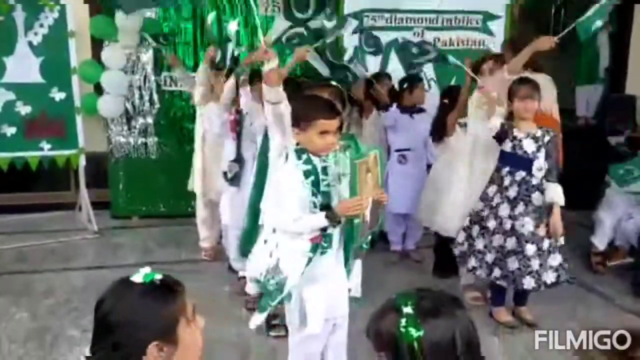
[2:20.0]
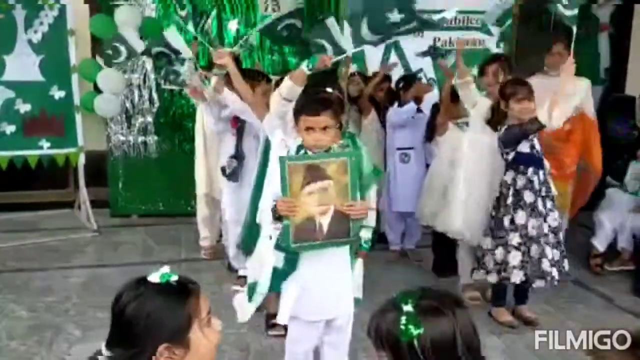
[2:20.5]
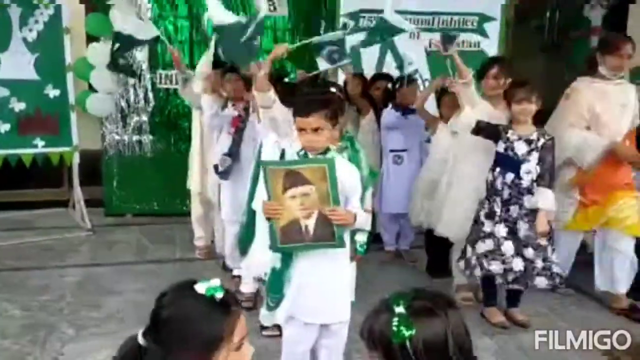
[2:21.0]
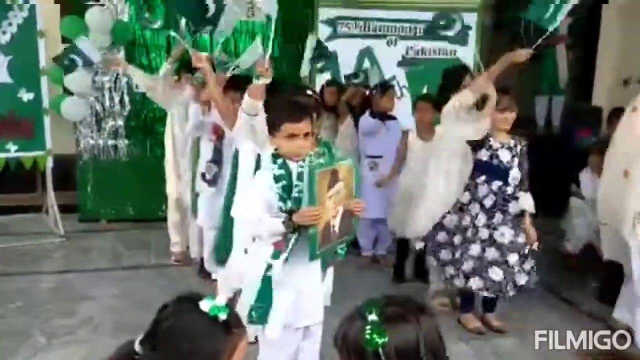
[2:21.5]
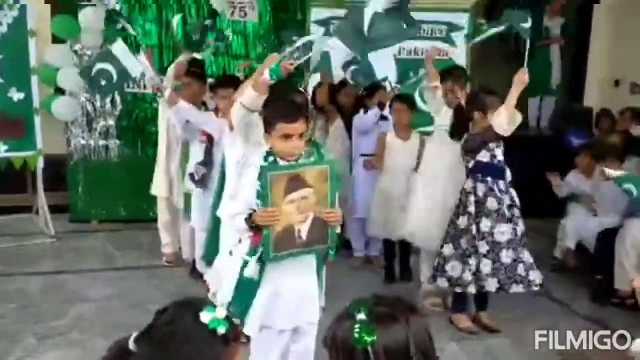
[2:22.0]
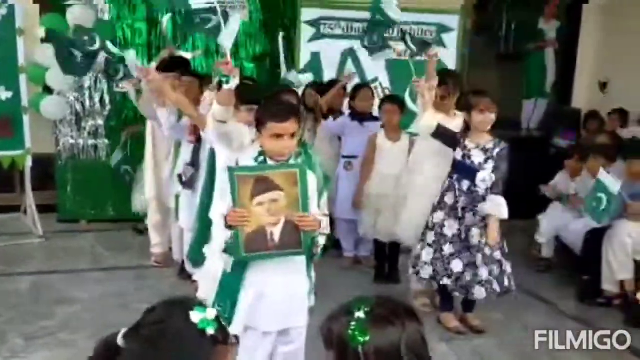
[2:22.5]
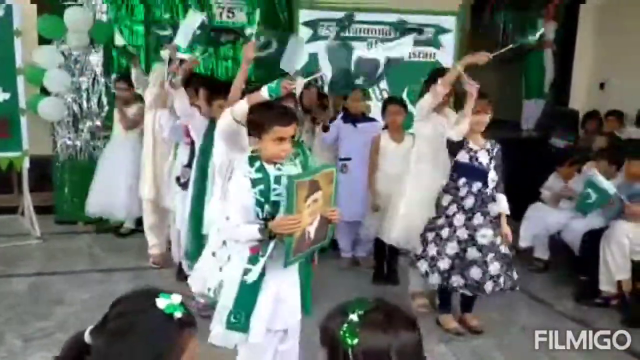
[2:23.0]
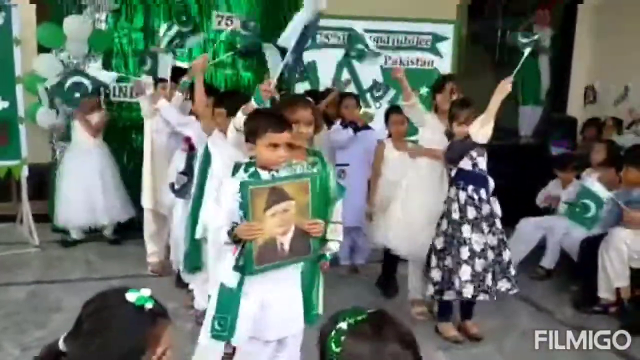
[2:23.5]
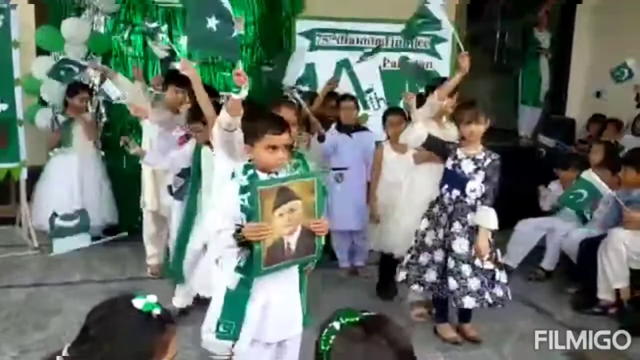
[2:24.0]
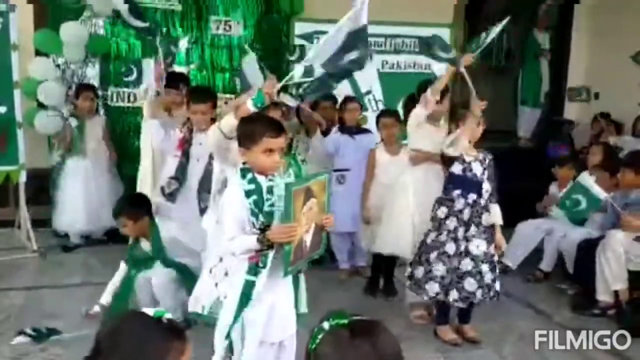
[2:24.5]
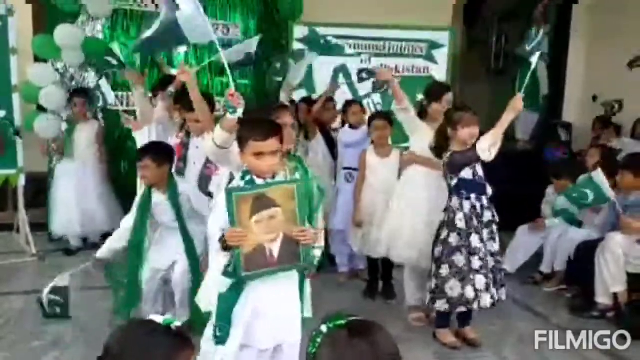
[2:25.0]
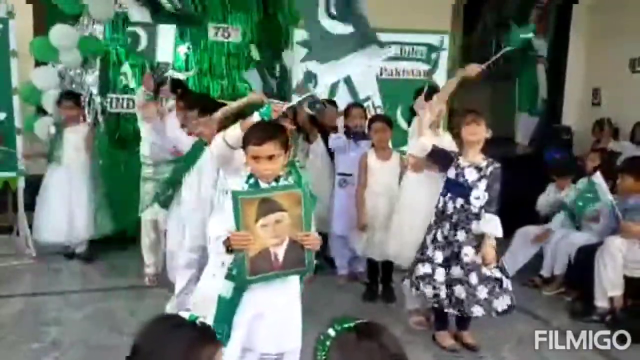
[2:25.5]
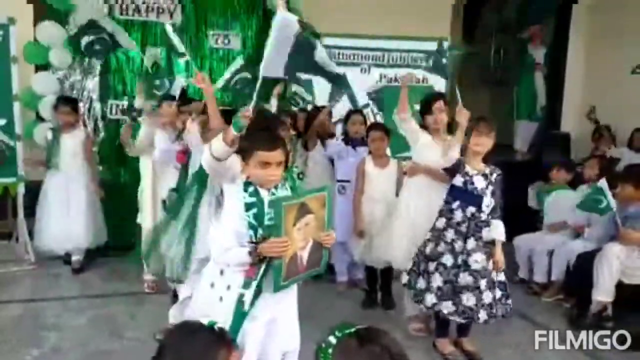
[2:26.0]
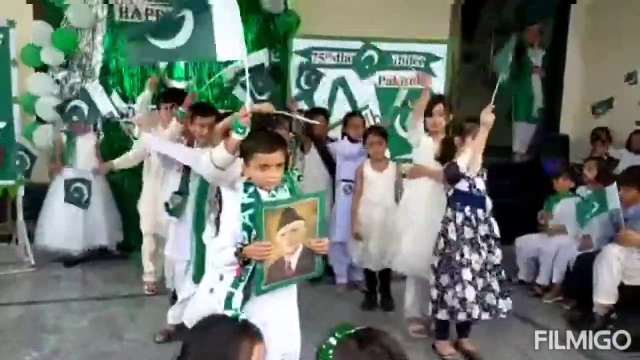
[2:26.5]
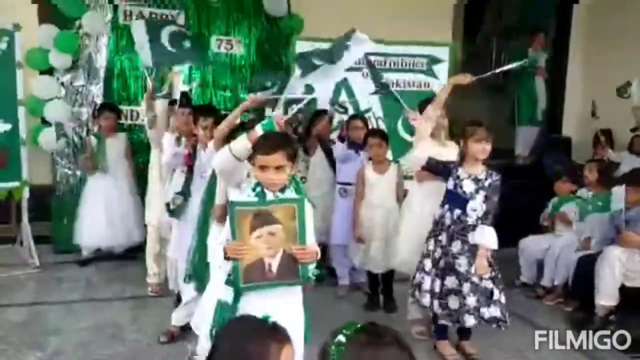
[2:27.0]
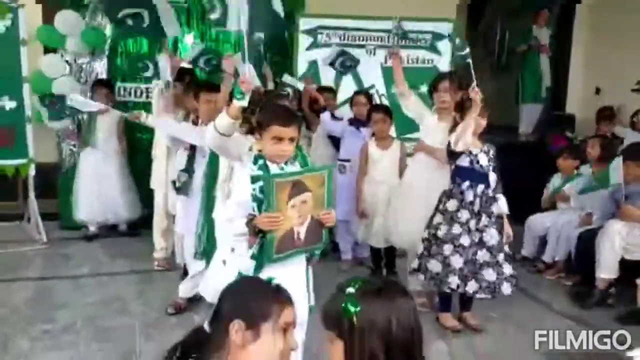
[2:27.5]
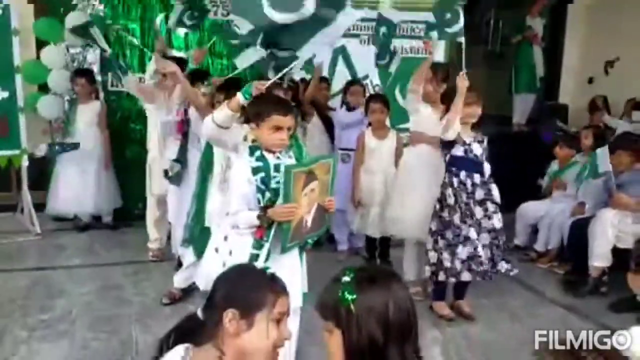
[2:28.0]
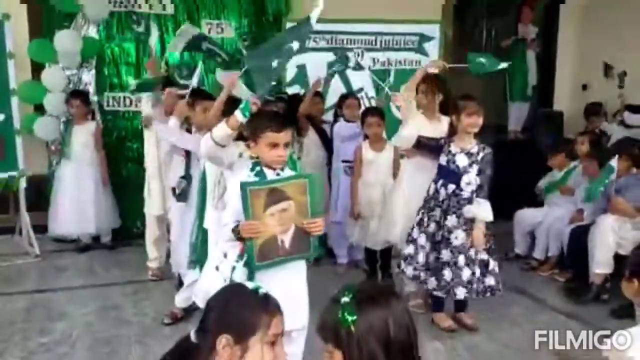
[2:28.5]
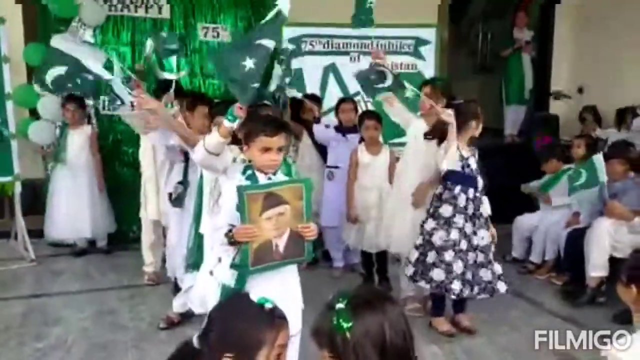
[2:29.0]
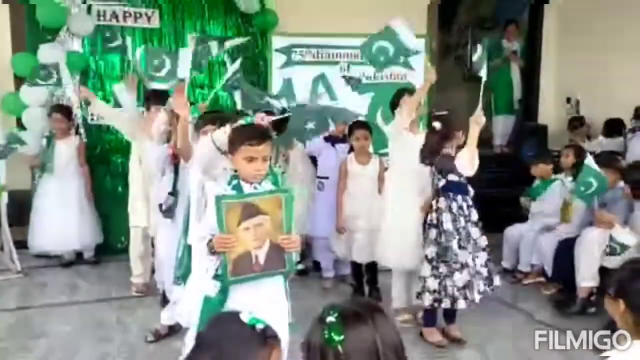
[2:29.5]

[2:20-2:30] The two rows of children keep waving the picture of the person or the Pakistani flags. One of the boys from the left row drops his flag and reaches out to grab it quickly. The teacher in the orange and cream dress walks out of frame on the right-hand side. One of the girls in a white dress holds a flag but hangs out on the left side, not really part of either row, waving her flag low and lazily at around waist level. One boy in the right-hand crowd claps, and the right-hand crowd is still kind of waving some of their flags. The woman in the doorway just kind of watches, not moving much. Two girls in the frontmost crowd are not moving much either and look like they are talking to each other.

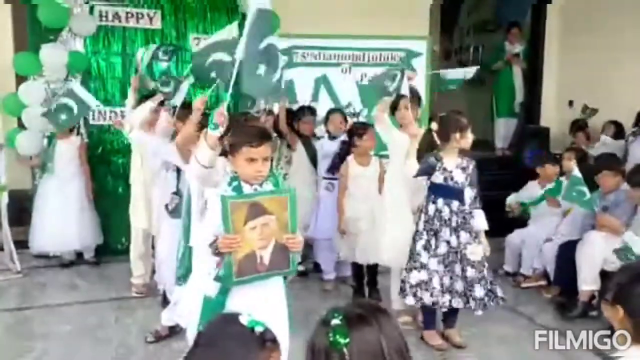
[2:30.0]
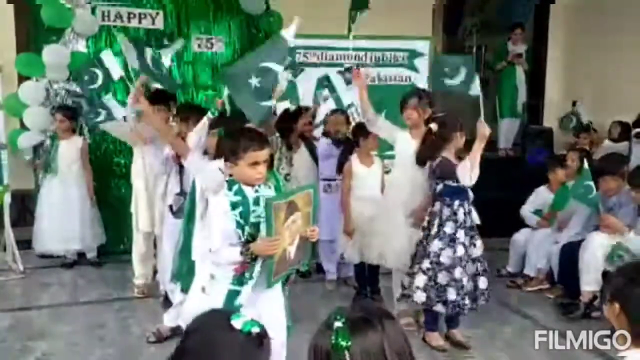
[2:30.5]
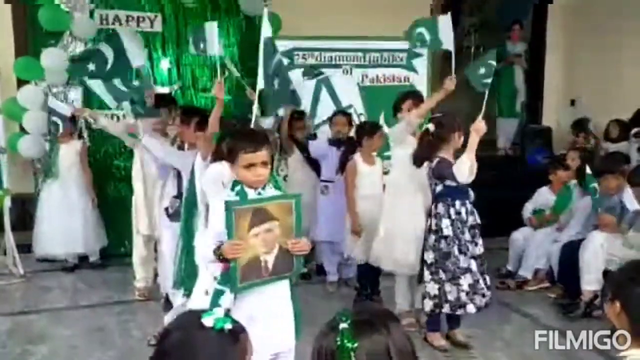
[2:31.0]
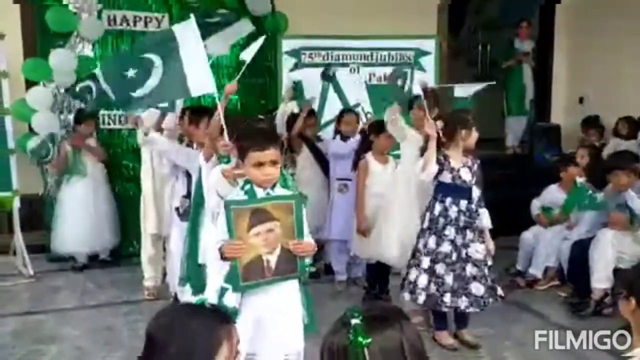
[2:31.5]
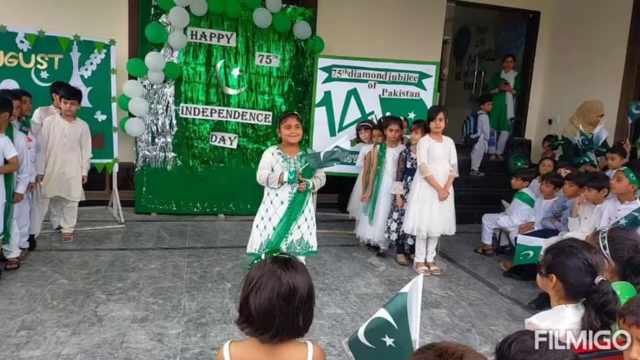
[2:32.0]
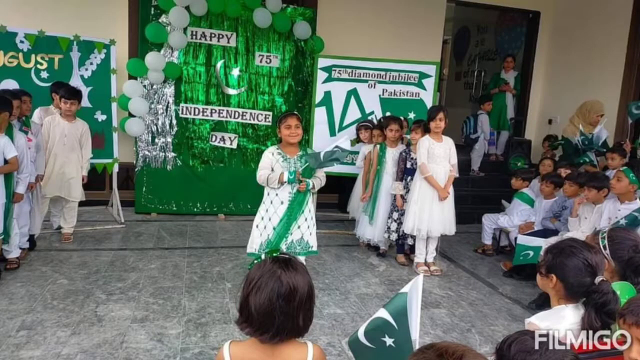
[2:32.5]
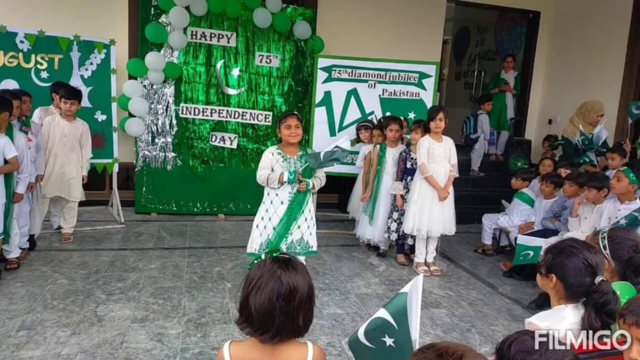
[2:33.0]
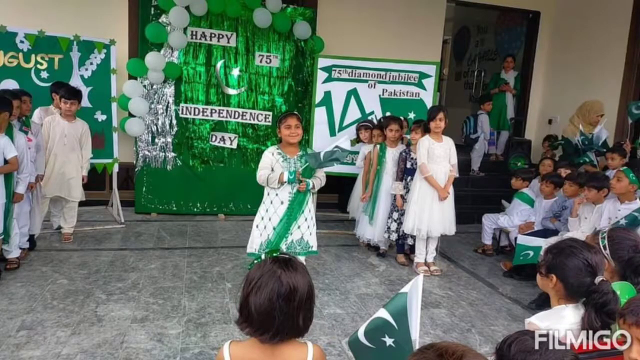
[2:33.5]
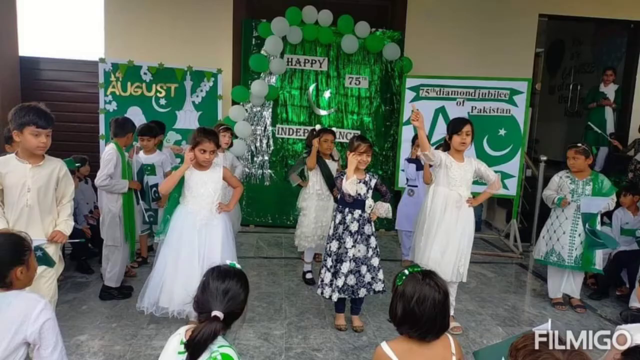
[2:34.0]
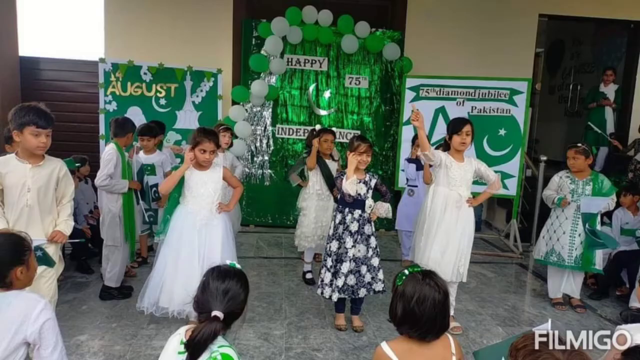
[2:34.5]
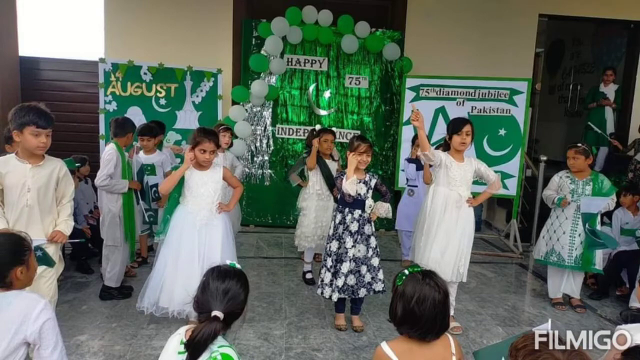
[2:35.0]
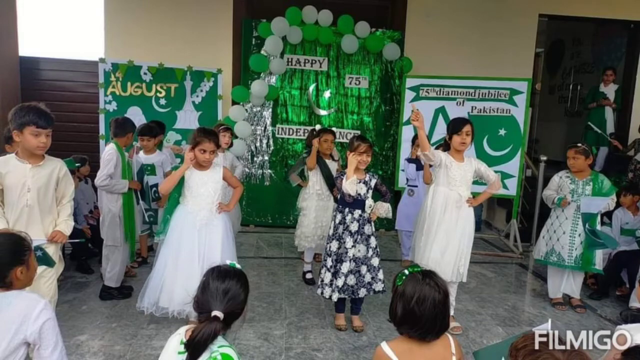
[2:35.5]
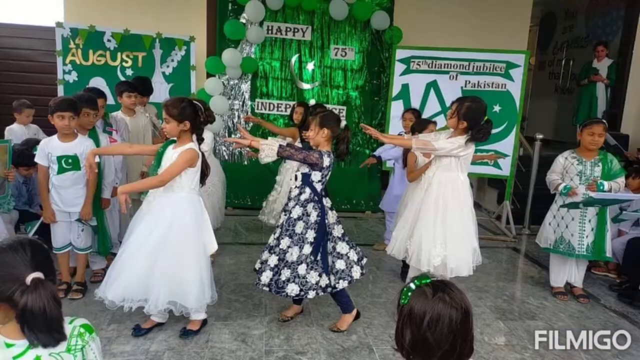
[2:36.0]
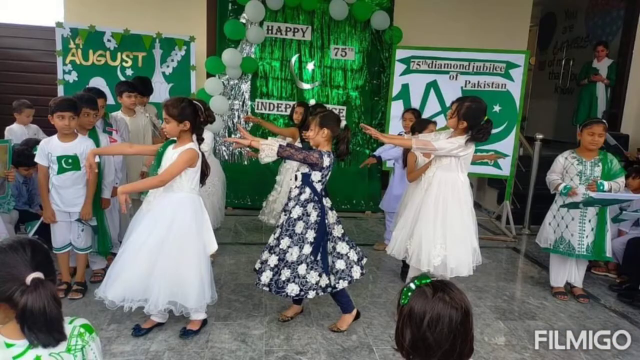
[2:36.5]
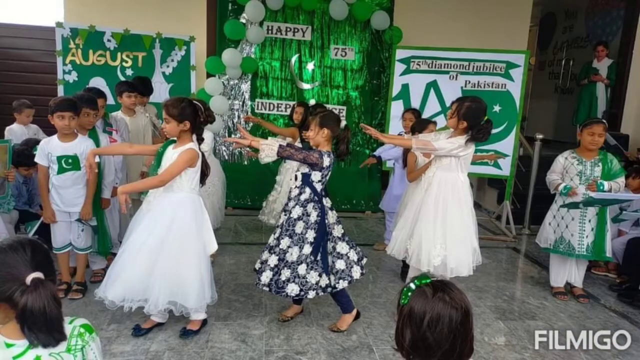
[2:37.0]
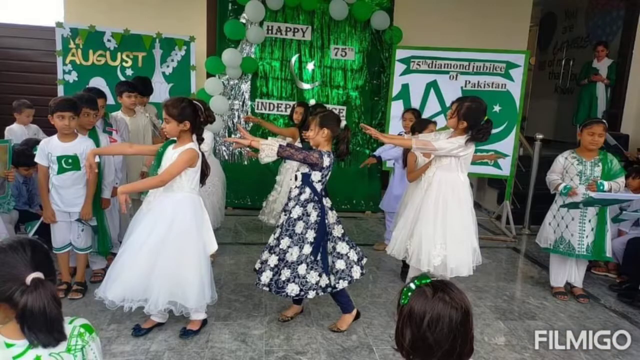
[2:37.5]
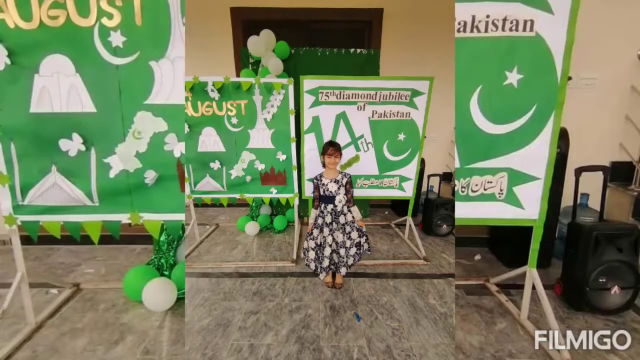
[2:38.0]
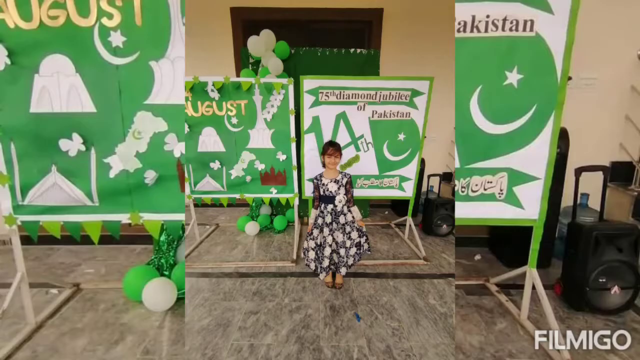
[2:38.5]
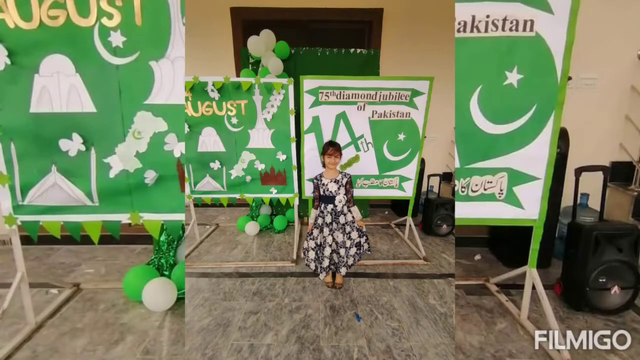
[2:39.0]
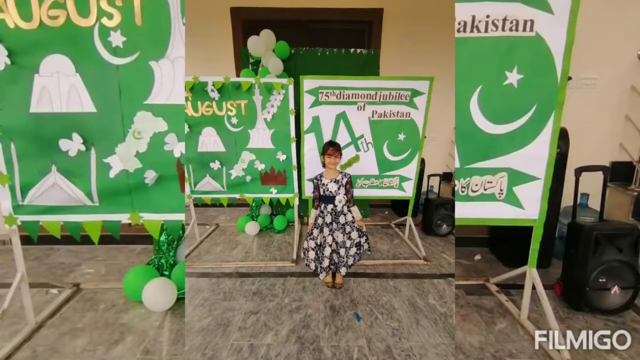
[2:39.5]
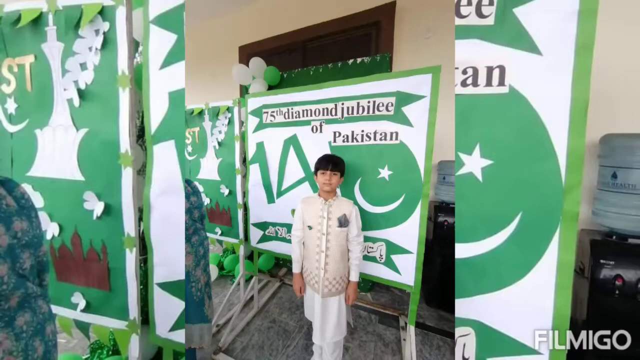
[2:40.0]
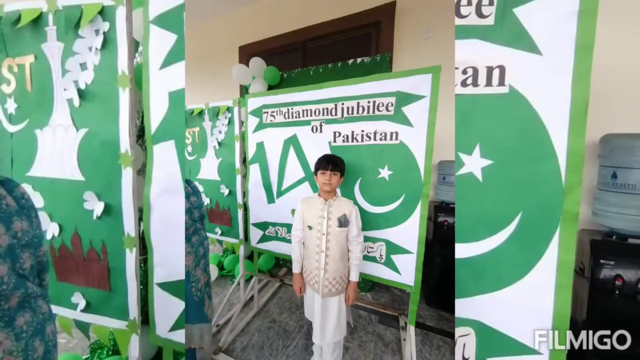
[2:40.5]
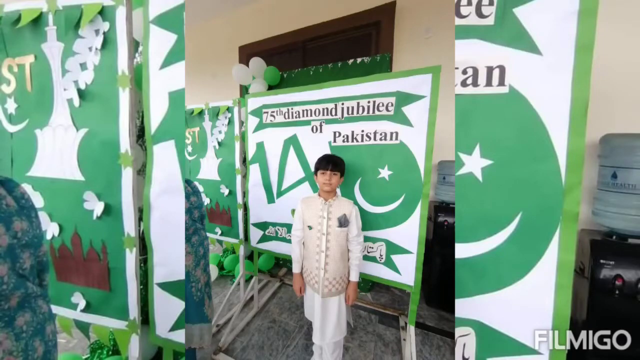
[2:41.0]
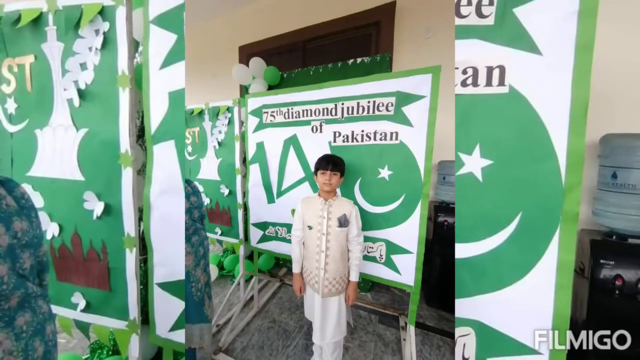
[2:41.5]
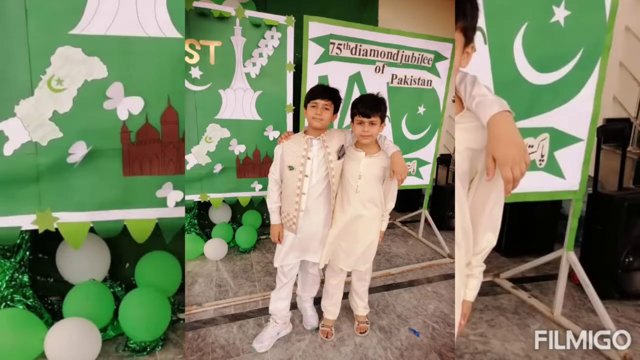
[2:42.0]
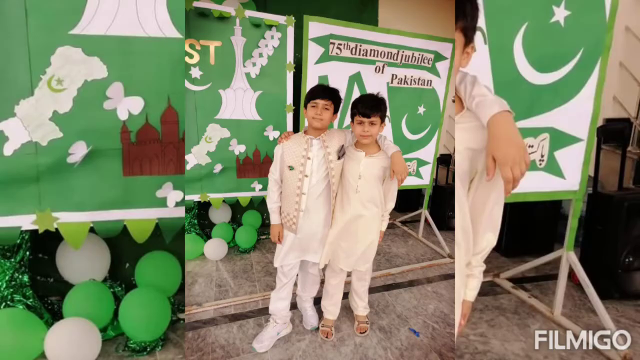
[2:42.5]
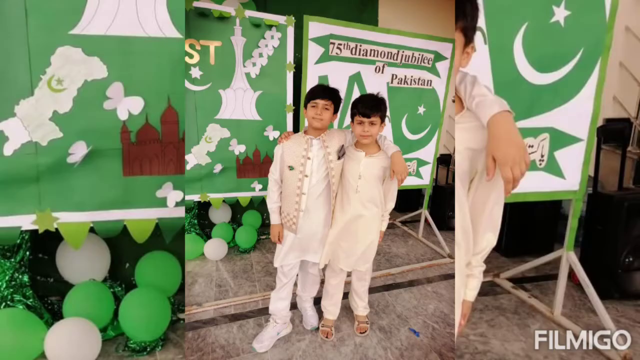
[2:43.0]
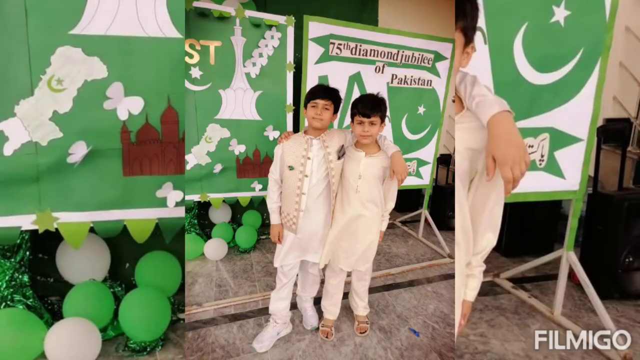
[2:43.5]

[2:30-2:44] At first the two rows of children are still waving their flags or the picture. The video then appears to end with a montage of still photos and images. The first shows girls. The second and third show the girls dancing; the third shows the girl in the black and white floral dress in front of two of the stands. The next picture is of the boy in the cream-colored vest standing in front of the 75th Diamond Jubilee of Pakistan stand. After that, the boy in the cream vest or jacket has his arm draped over another boy in a white outfit in front of the Diamond Jubilee stand.